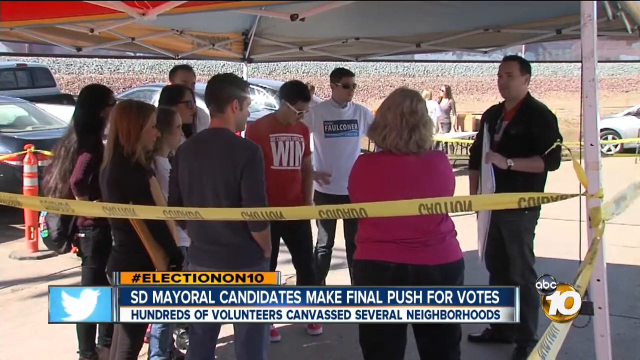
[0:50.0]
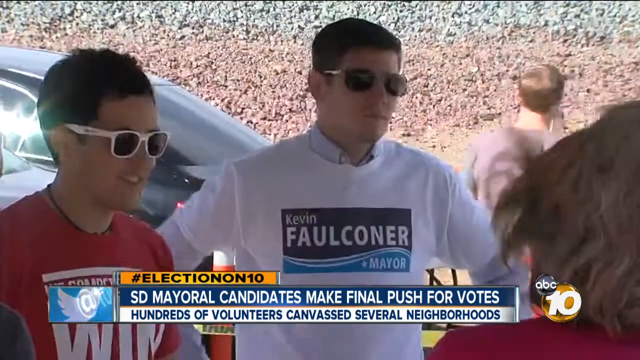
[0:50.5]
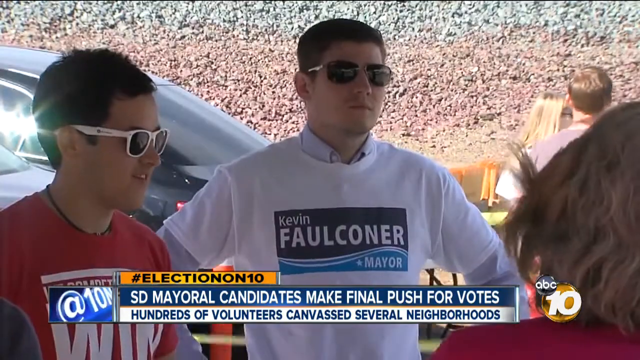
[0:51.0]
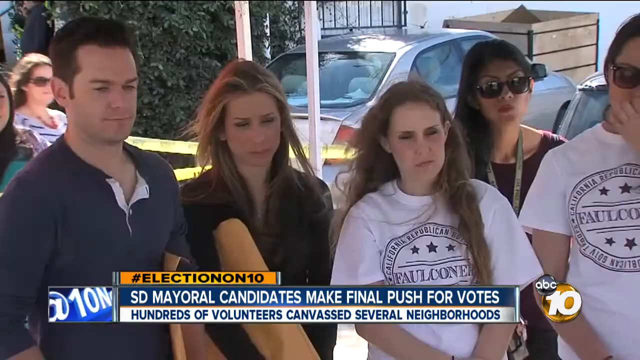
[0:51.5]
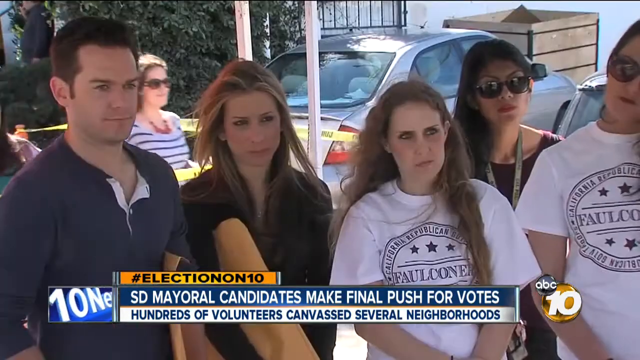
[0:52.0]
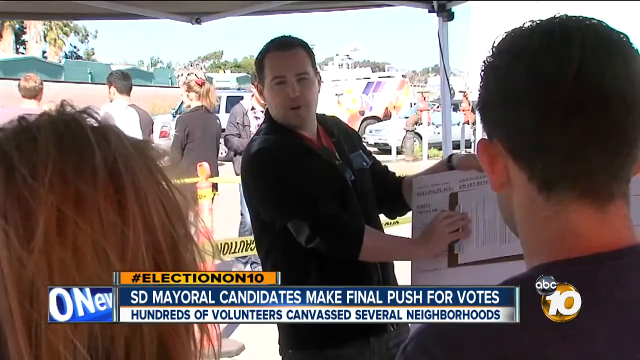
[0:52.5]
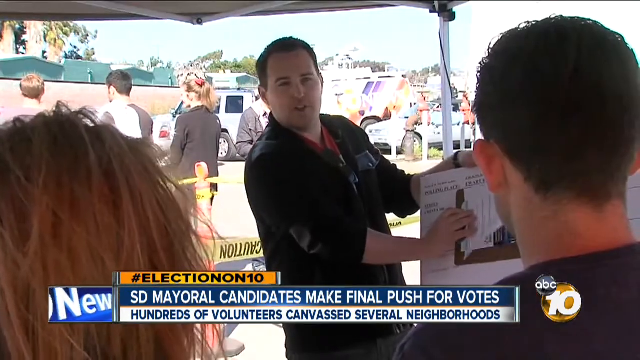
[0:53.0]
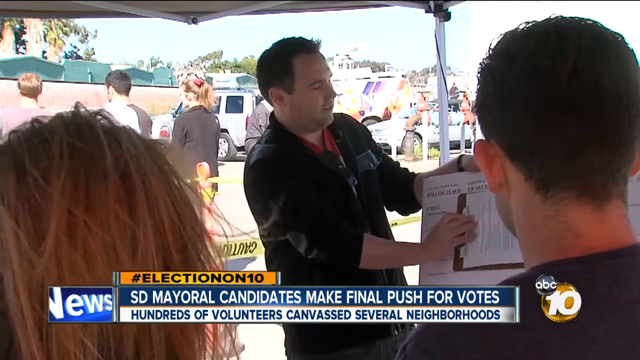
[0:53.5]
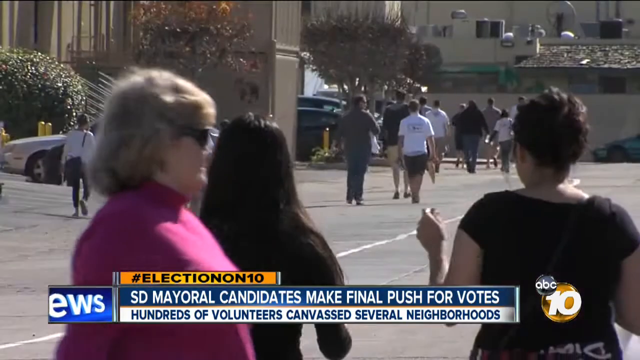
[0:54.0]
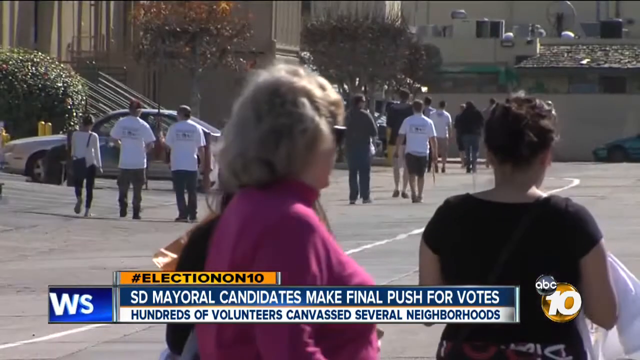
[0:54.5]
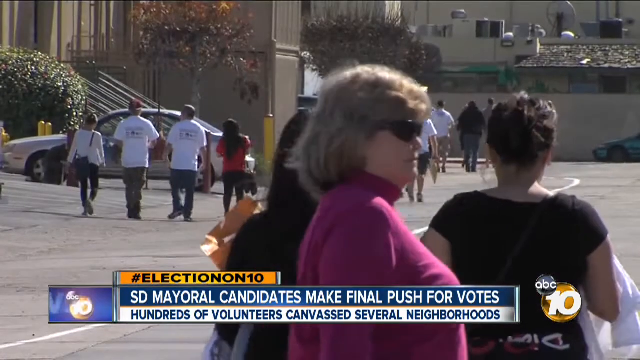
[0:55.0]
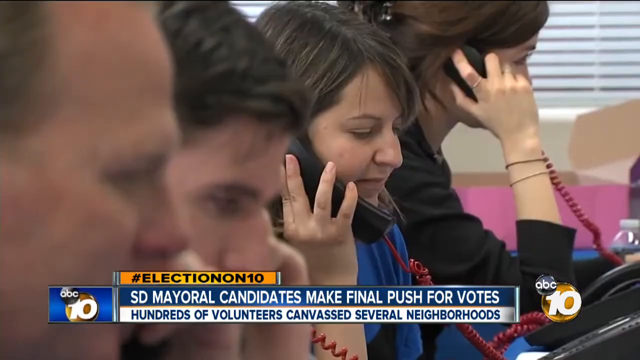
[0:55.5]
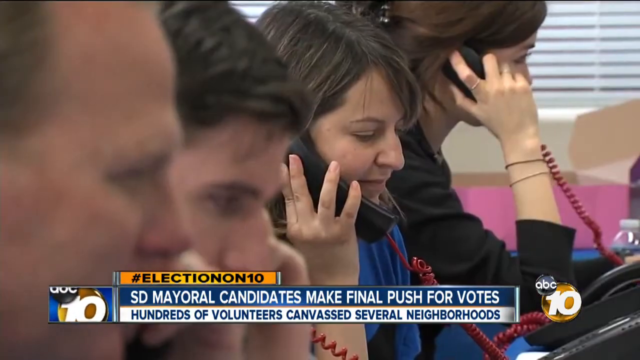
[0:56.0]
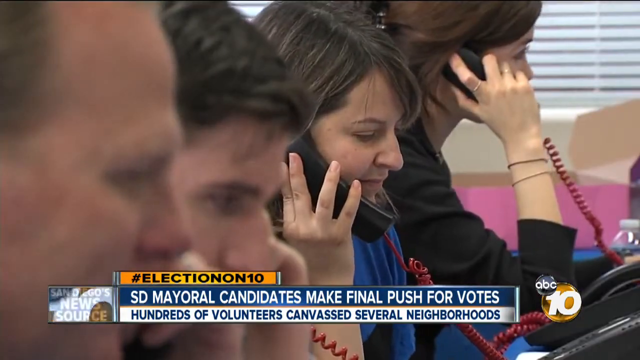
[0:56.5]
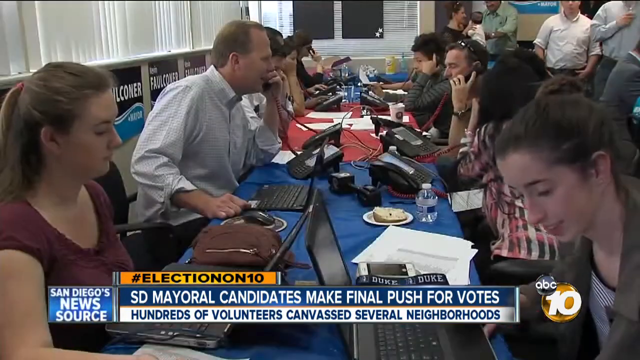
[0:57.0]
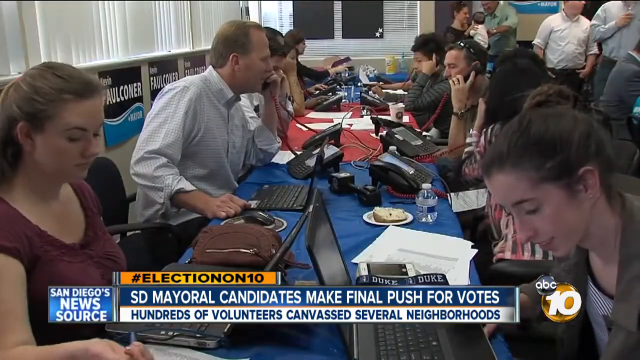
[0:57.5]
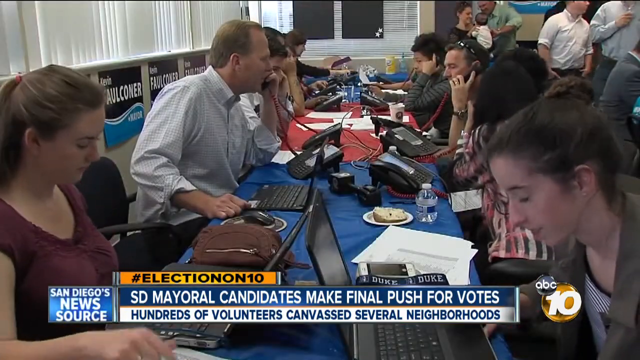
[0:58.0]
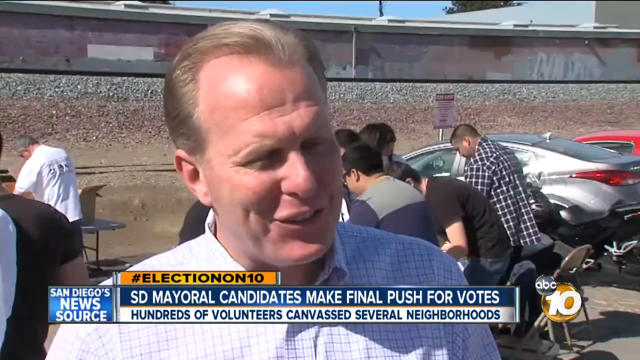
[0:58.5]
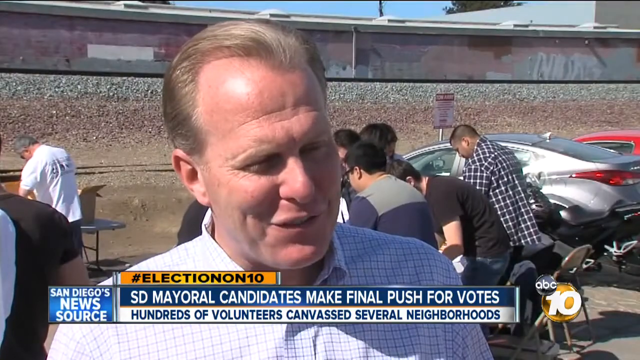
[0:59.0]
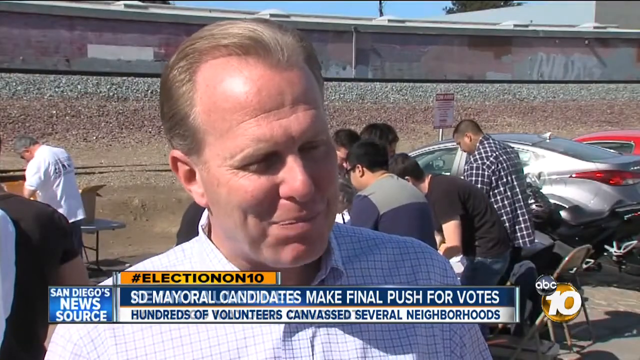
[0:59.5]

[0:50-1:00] In an outdoor setting, a canopy is above ten people standing beneath it. Yellow tape runs across from the right-hand pole to the left. A zoomed-in view then shows some of the people facing the camera, looking toward the bottom right corner of the screen. Two people on the right wear sunglasses, and three on the left do not. A banner at the bottom reads "Election 10, SD mayoral candidates make final push for votes. Hundreds of volunteers canvassed several neighbourhoods."